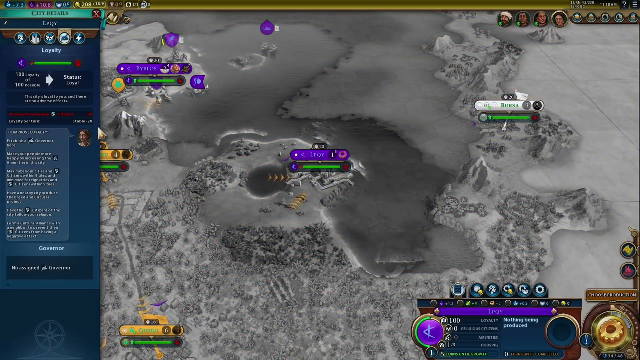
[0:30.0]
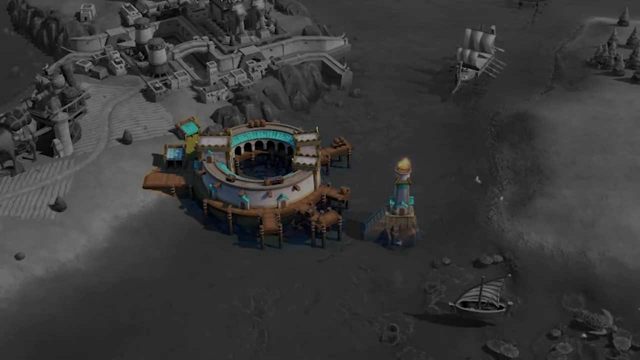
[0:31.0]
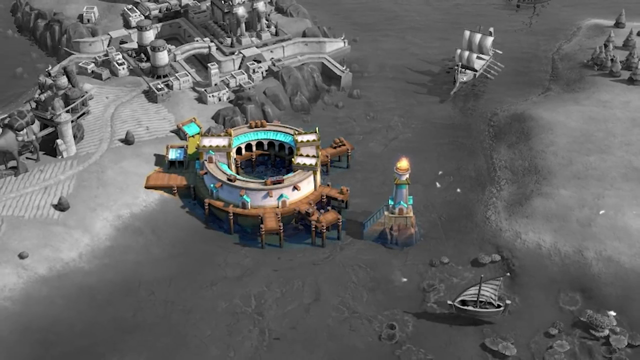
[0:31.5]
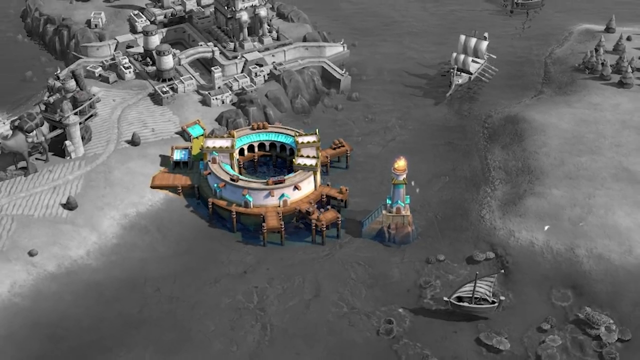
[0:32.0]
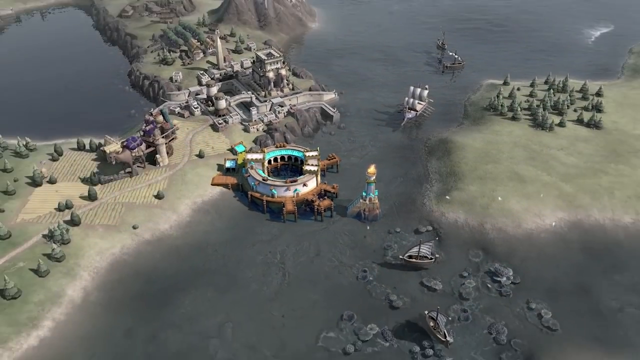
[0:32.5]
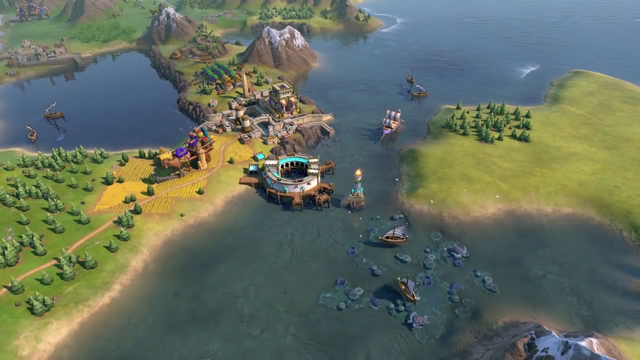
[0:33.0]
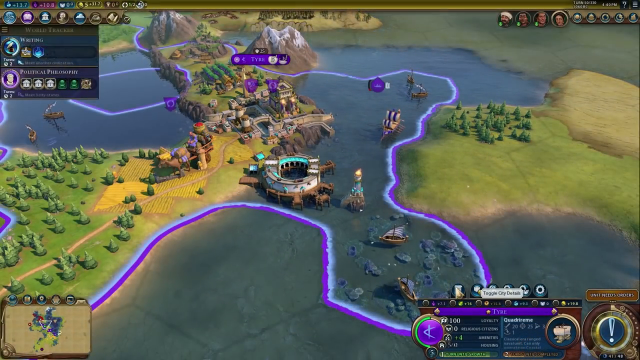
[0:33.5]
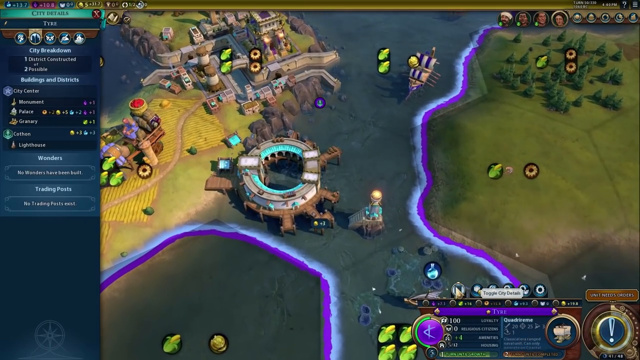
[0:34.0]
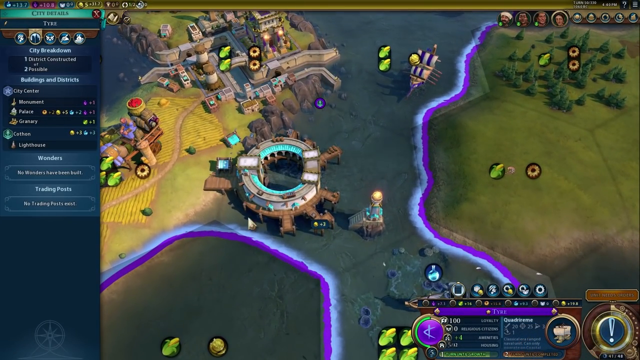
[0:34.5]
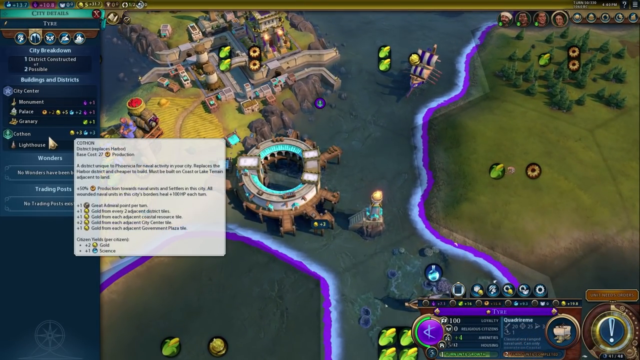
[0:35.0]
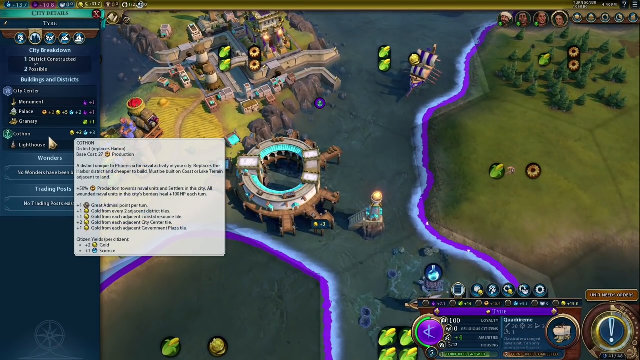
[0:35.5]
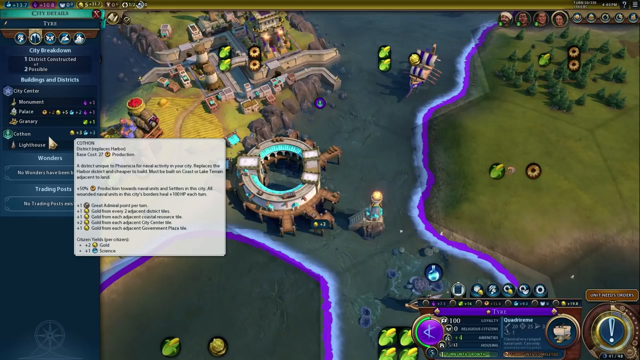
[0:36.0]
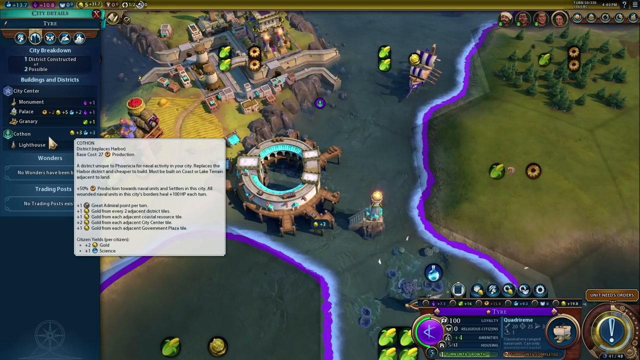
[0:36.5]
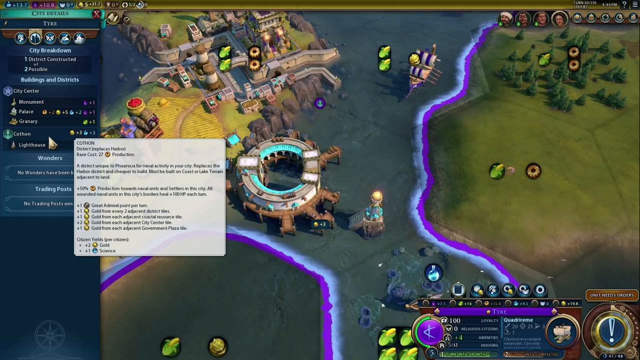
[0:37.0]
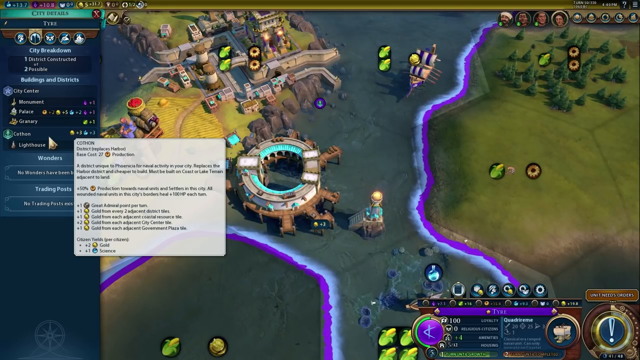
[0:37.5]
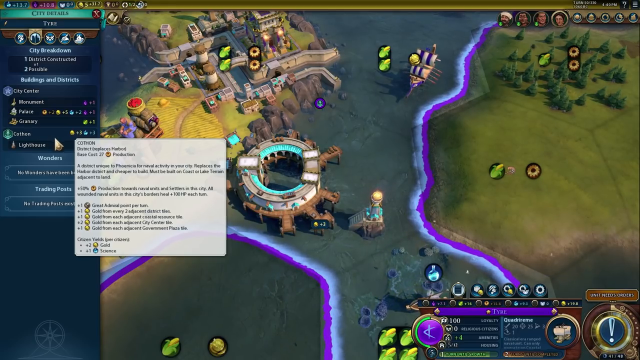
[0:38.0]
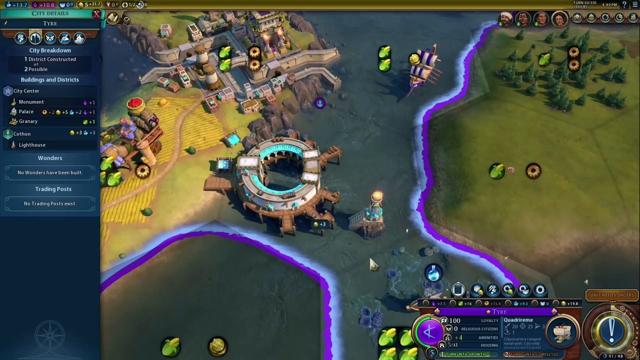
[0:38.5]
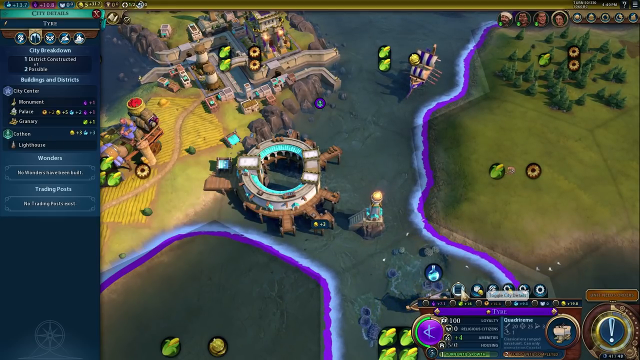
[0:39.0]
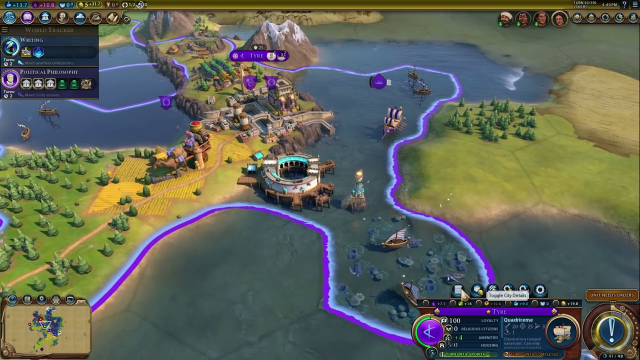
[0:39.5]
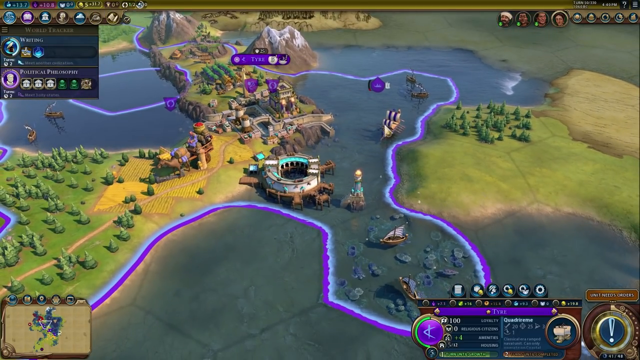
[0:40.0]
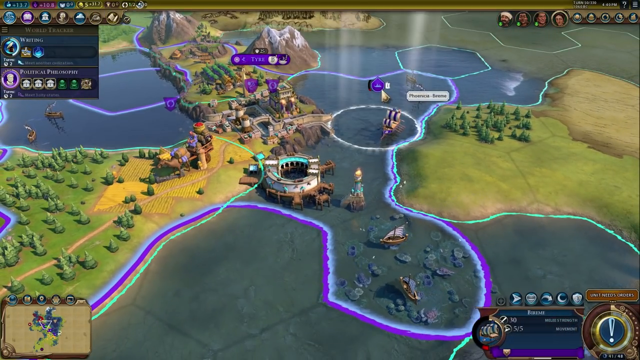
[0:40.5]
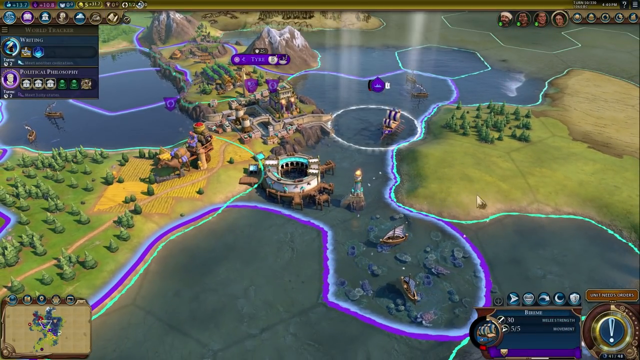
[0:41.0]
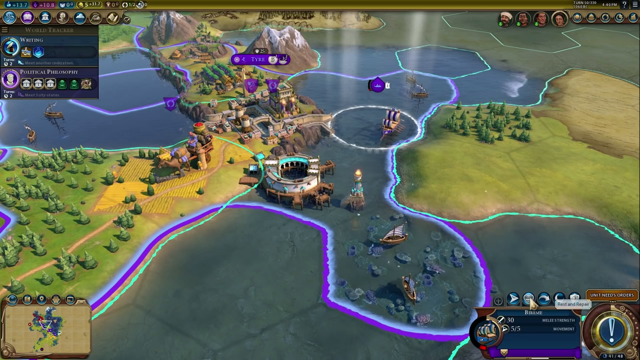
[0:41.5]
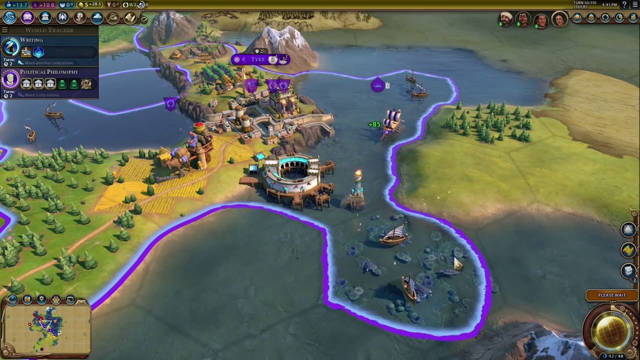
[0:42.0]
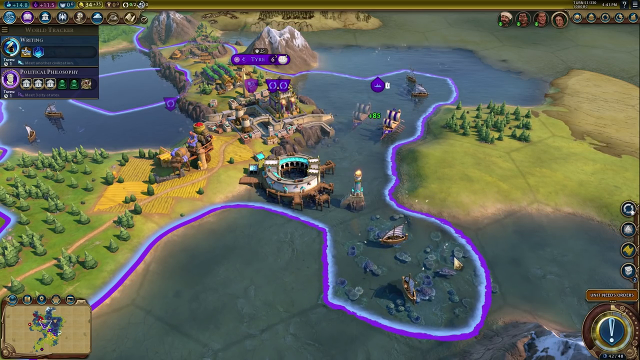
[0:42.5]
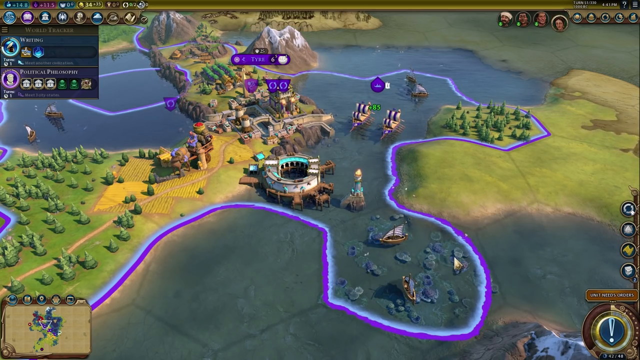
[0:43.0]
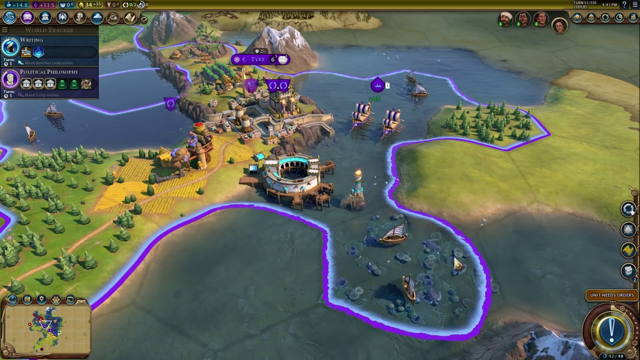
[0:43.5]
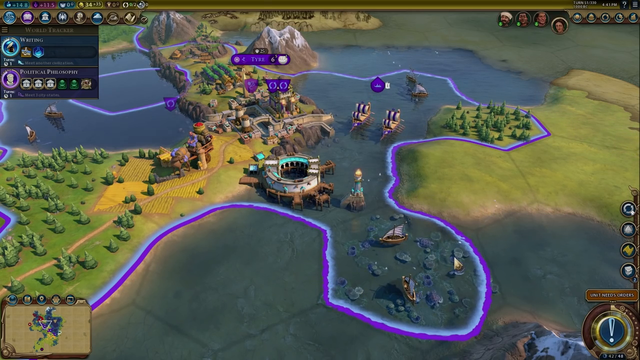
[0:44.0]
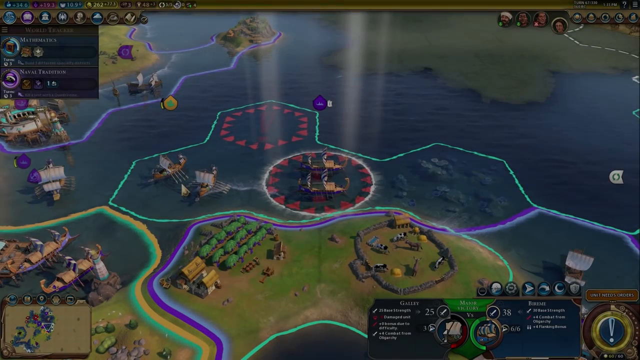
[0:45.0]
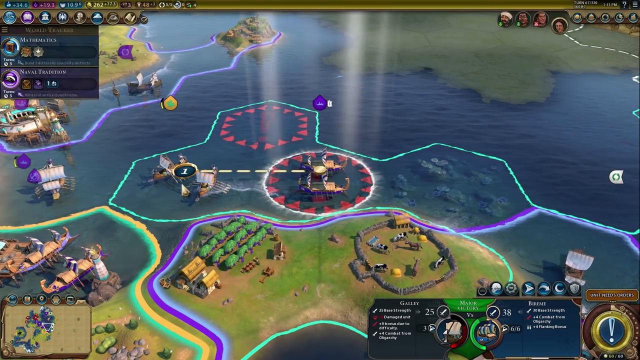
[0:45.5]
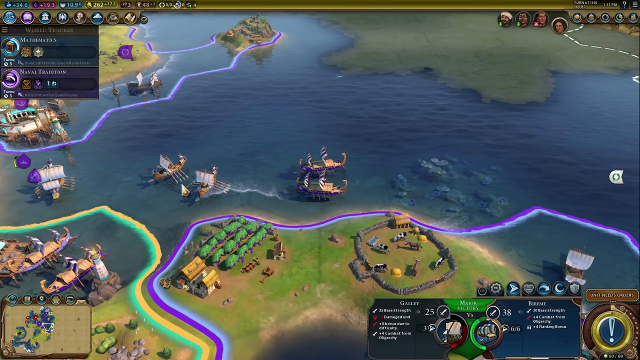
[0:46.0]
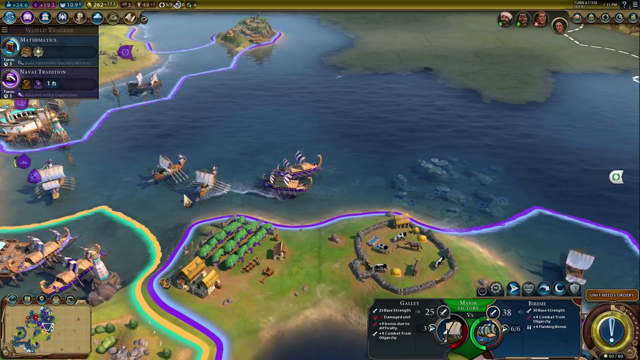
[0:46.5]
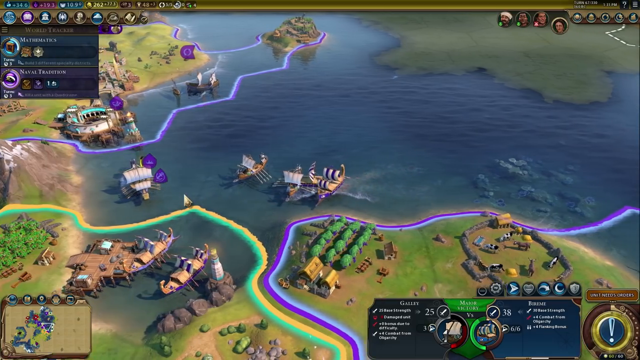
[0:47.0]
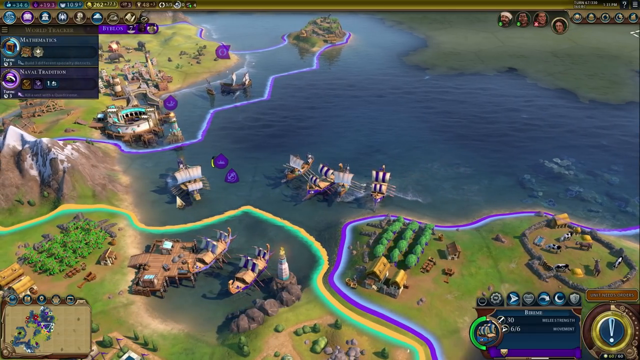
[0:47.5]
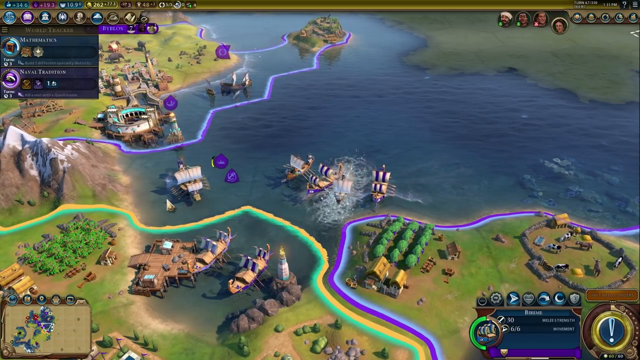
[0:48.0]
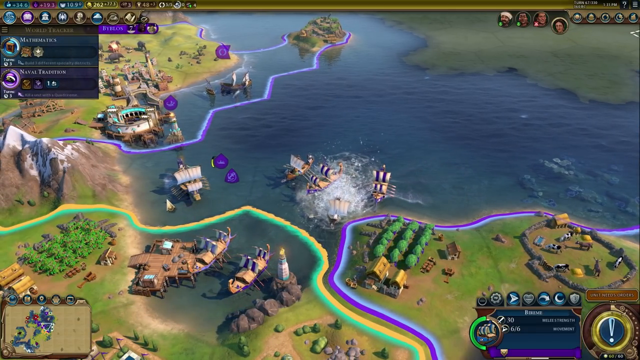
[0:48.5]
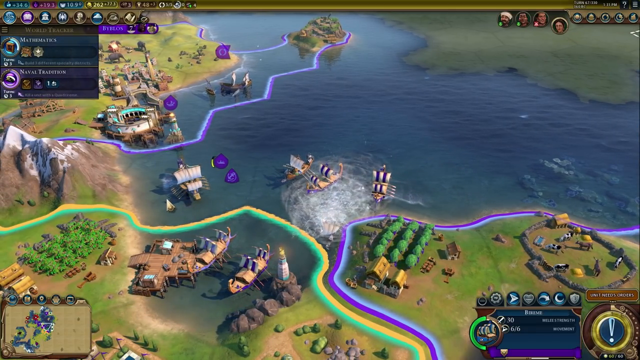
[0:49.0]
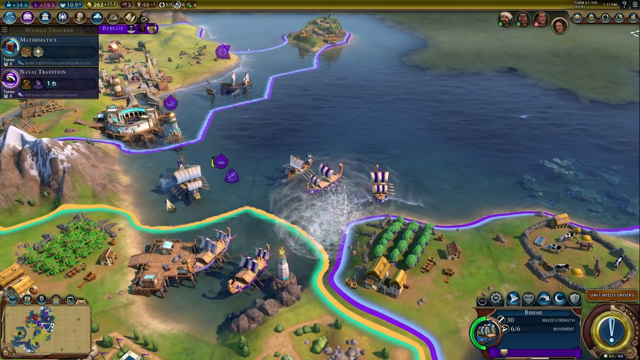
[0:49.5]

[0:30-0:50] What appears to be gameplay from Civilization VI is shown. A map is at first grayed out, then seems to become active and appears in color. A lot of text and commands are on the left side of the screen, apparently showing the various buildings and things the user has created. The cursor moves around, highlighting different sections of the map, most likely to build different objects. The view zooms in on part of the map that has different boats and ships on it, which the player apparently controls as well. There are many settlements and small bits of cities, while a lot of sparse areas of the map have nothing on them yet.